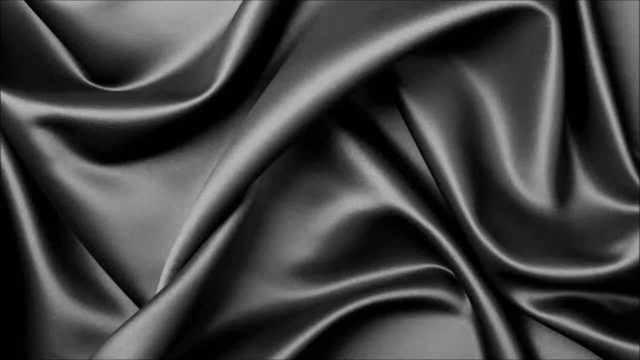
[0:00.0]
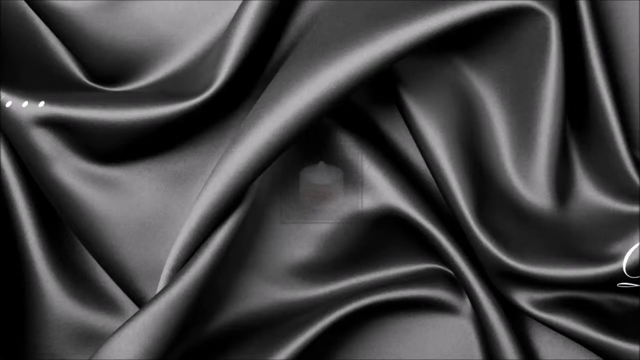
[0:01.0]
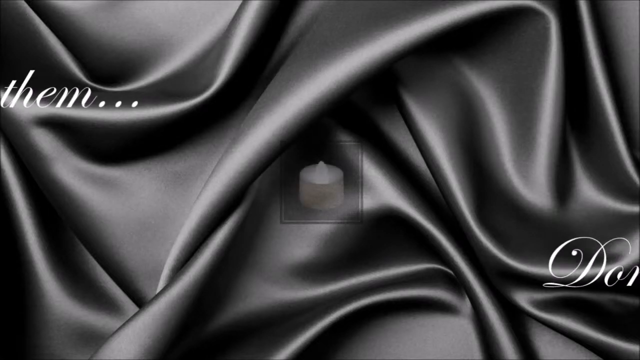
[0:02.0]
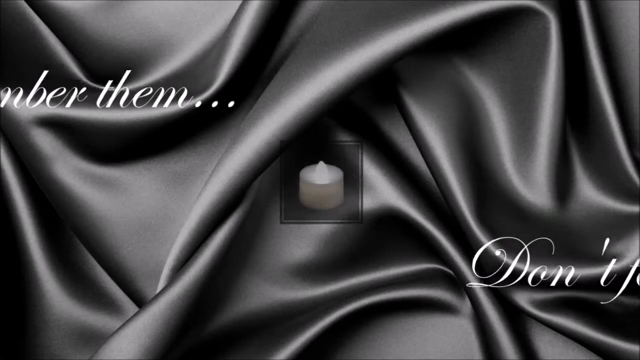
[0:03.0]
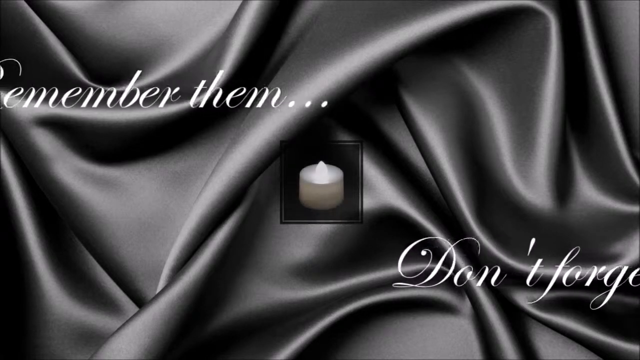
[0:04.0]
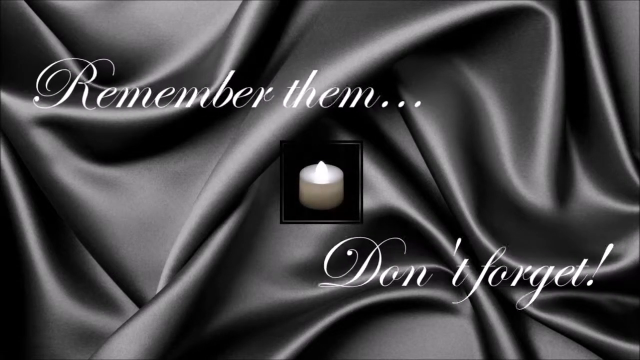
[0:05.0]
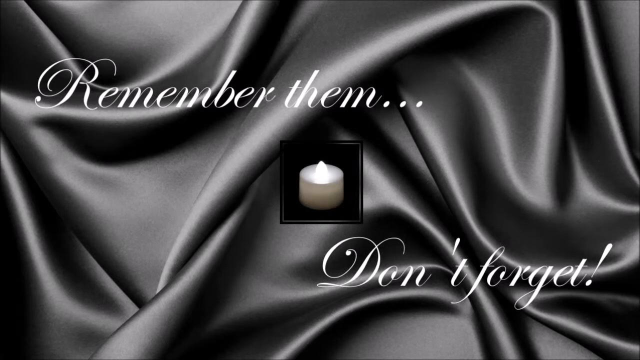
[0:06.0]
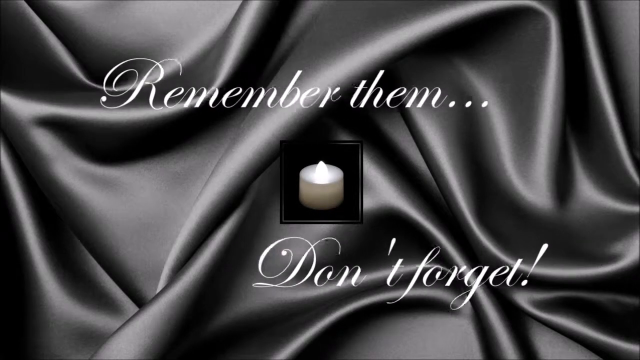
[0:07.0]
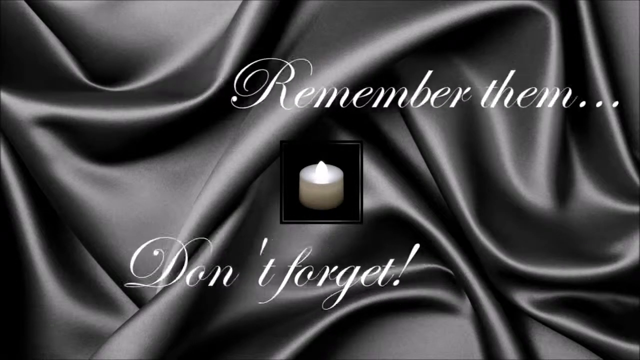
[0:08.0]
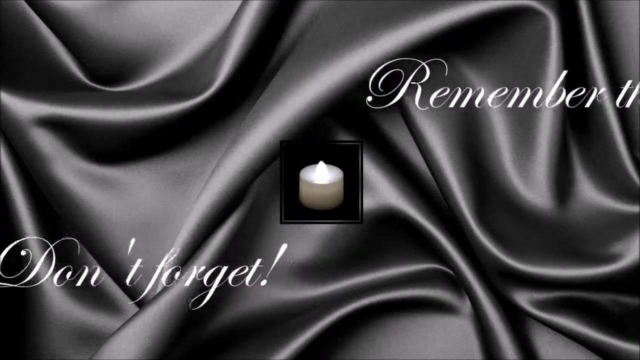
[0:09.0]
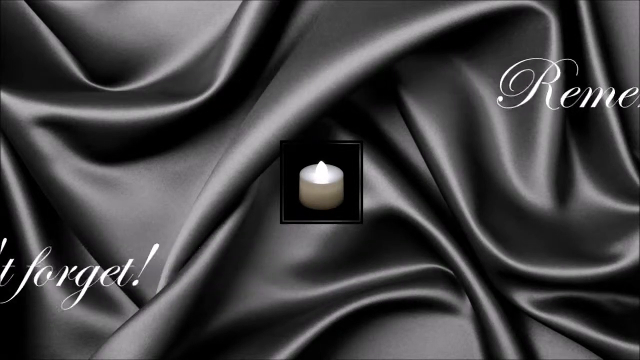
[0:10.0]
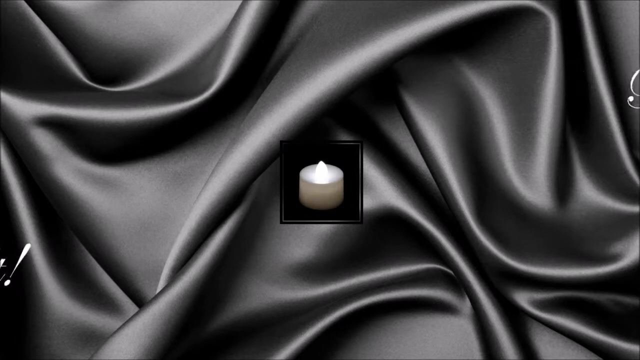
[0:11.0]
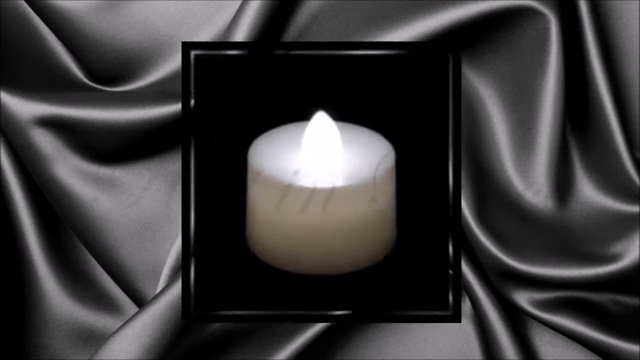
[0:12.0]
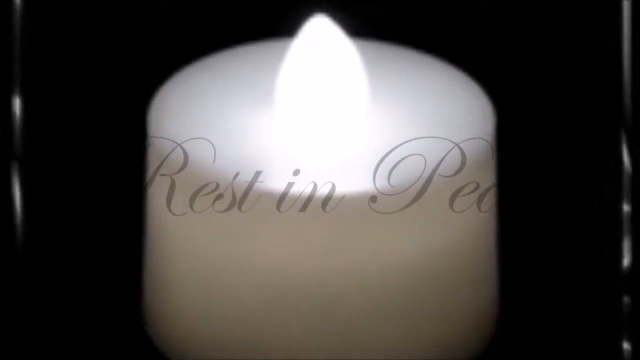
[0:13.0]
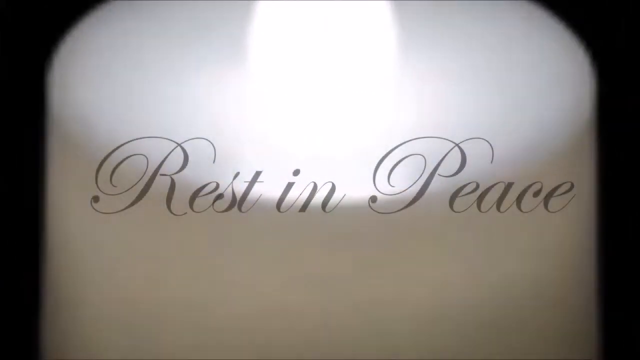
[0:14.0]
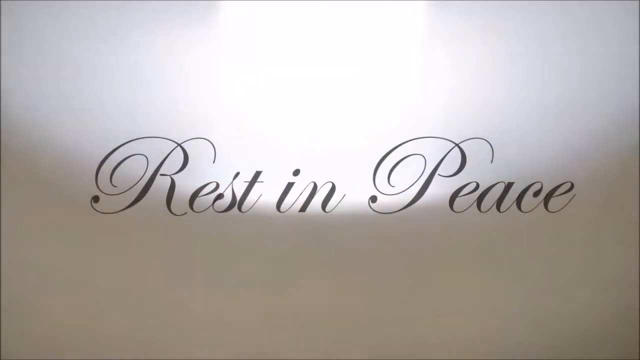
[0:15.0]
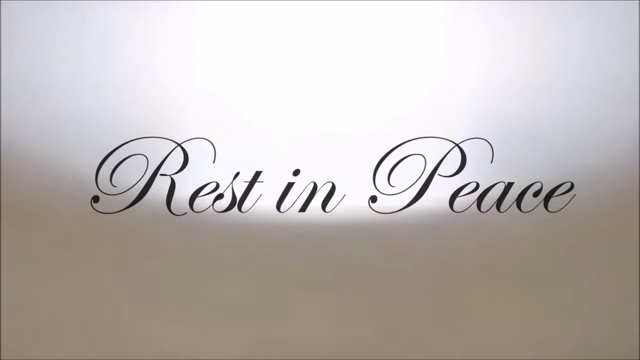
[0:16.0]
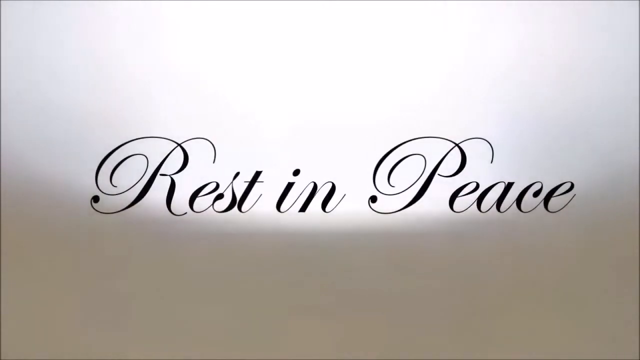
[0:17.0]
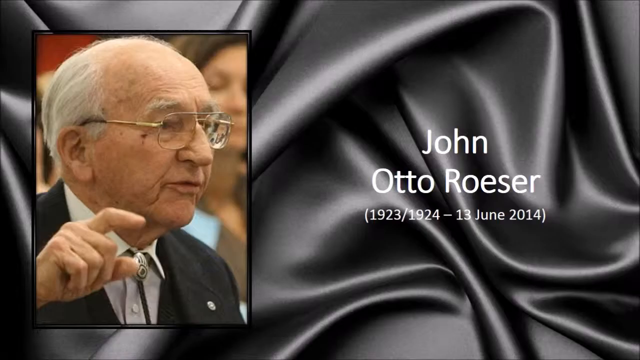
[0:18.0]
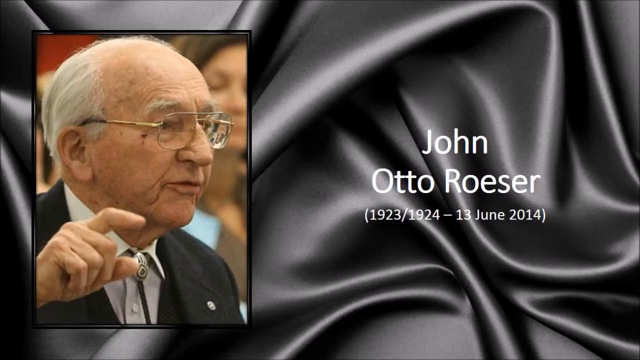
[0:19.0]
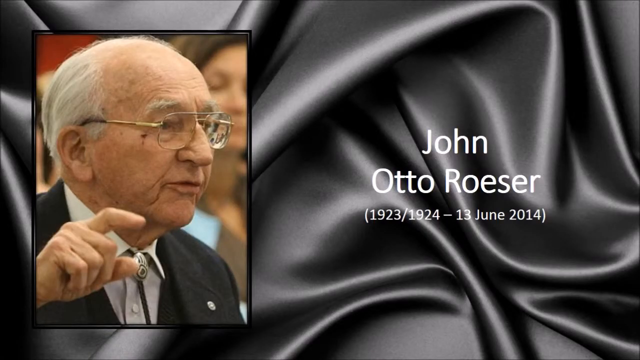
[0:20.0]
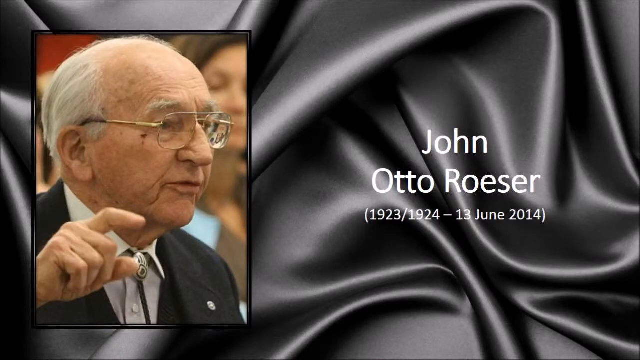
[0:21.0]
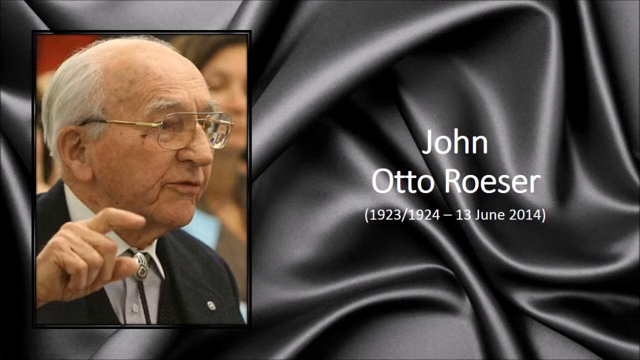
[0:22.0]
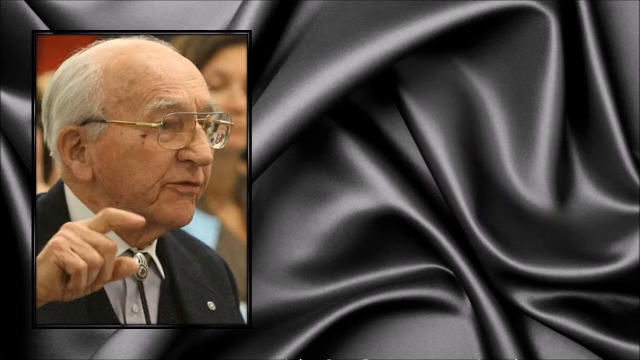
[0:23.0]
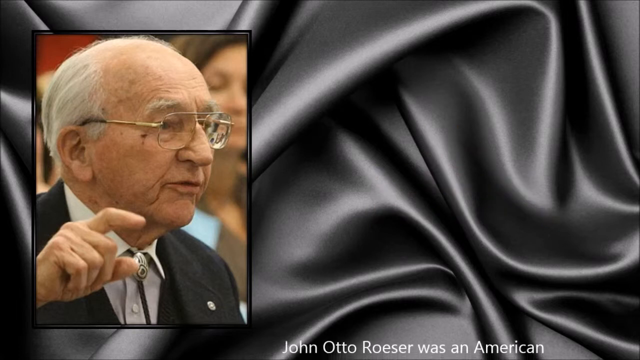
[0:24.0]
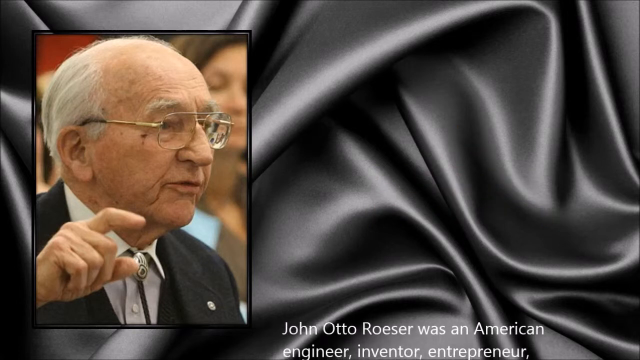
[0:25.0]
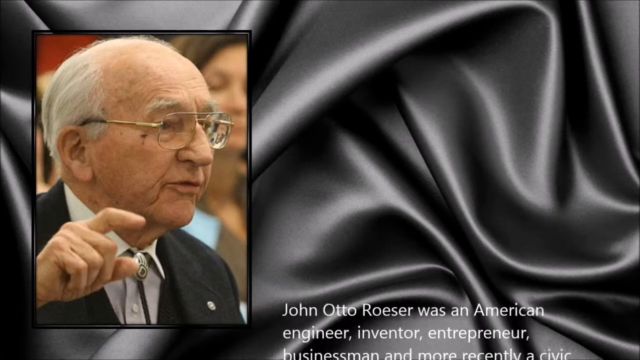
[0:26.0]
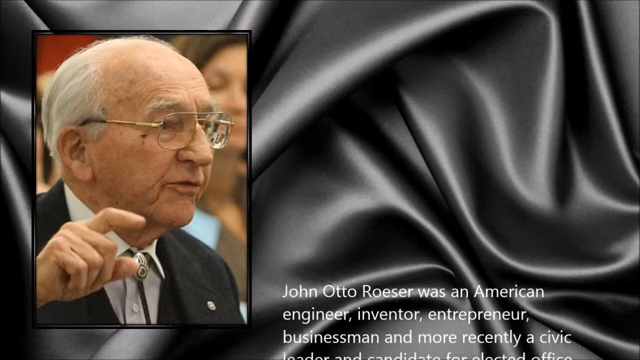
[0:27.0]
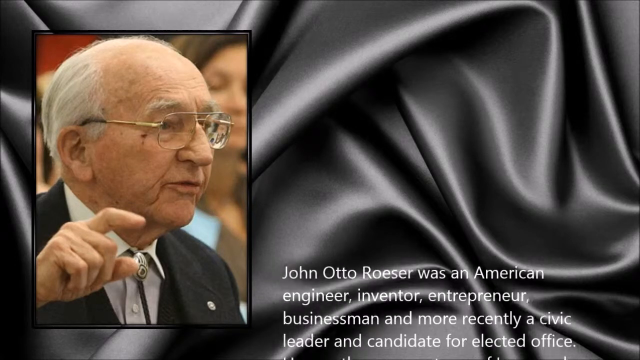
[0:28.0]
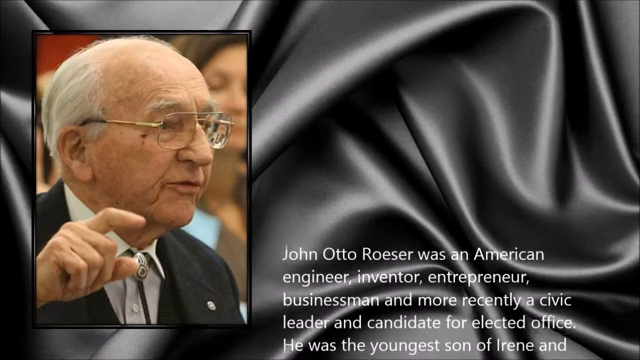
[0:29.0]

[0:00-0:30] A memorial or remembrance video for someone who has passed away begins with what looks like a satin sheet as the background. A picture of a candle comes into frame in the middle of the screen, and text comes in from both sides reading "remember them, don't forget." The text leaves the frame and the candle grows bigger, revealing the words "rest in peace." A picture of a man then appears; his name is John Otto Roeser, born in 1923 or 1924, who lived until June 13, 2014. Text scrolls up from the bottom of the screen, reading: "John Otto Roeser was an American engineer, inventor, entrepreneur, businessman, and more recently, civic leader and candidate for elected office." The video seems meant to play at the man's funeral or memorial.